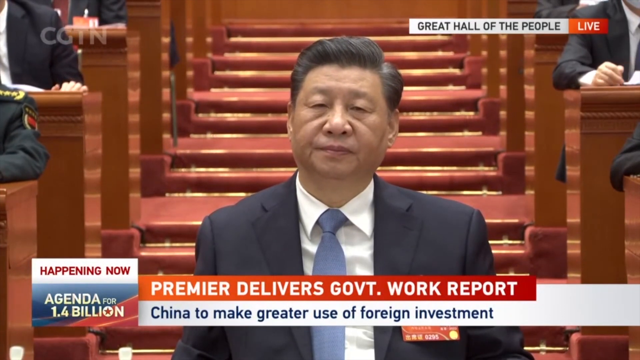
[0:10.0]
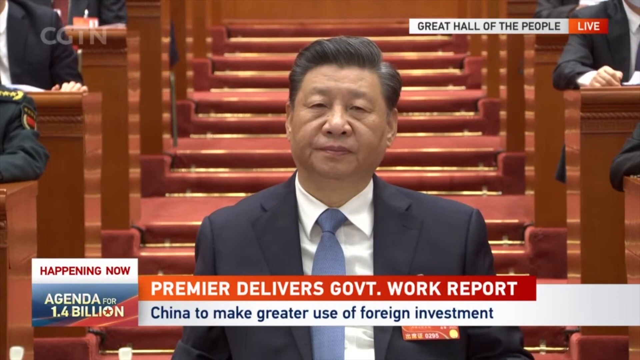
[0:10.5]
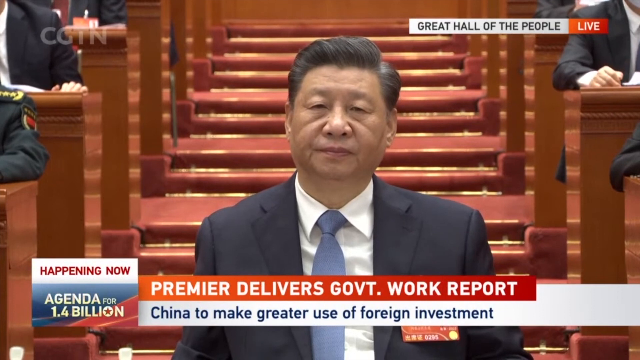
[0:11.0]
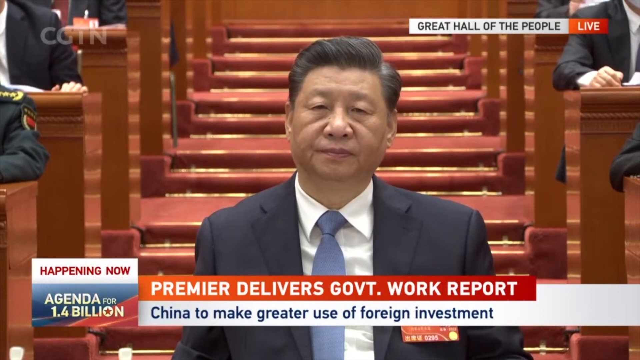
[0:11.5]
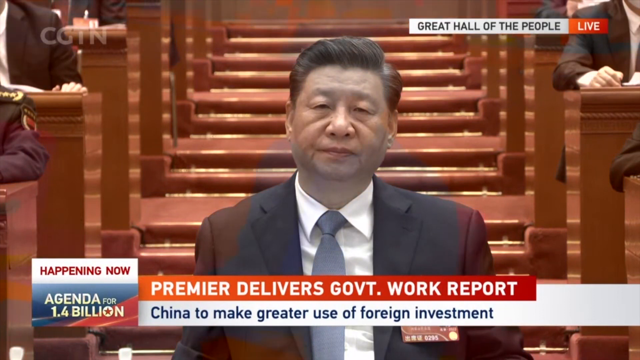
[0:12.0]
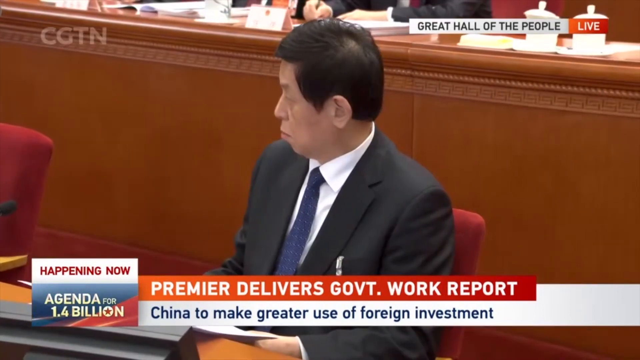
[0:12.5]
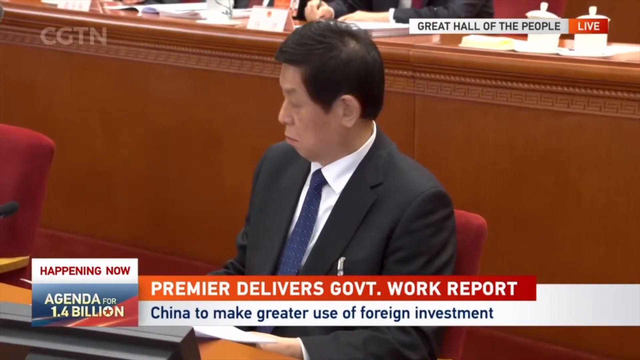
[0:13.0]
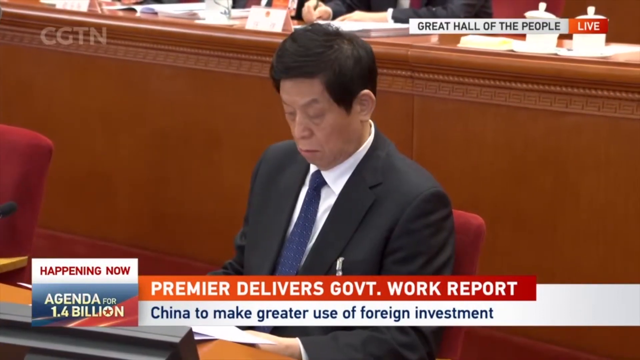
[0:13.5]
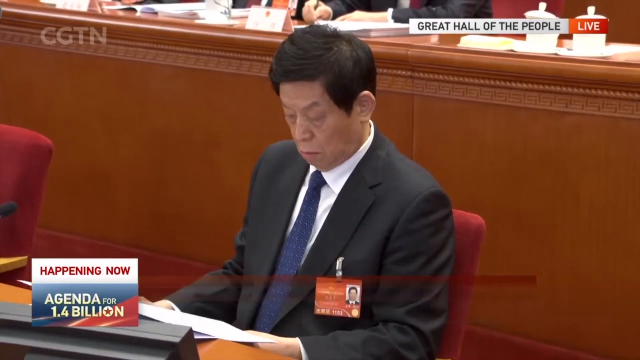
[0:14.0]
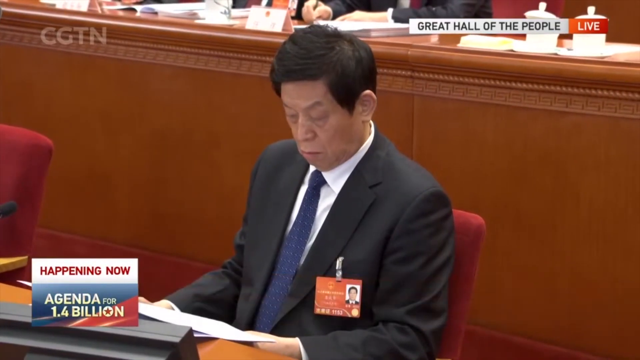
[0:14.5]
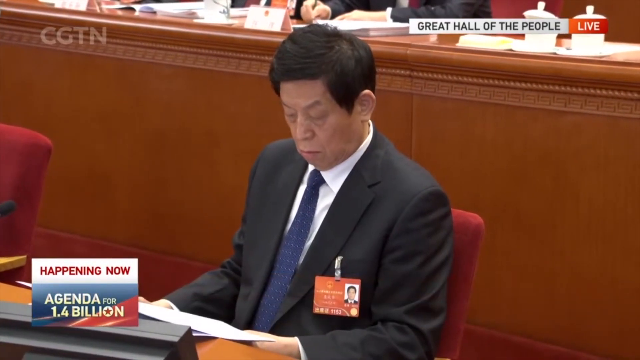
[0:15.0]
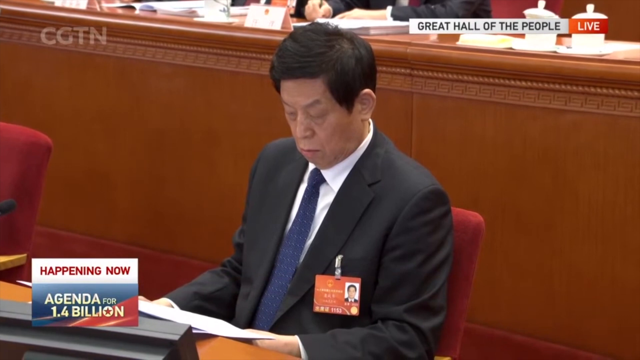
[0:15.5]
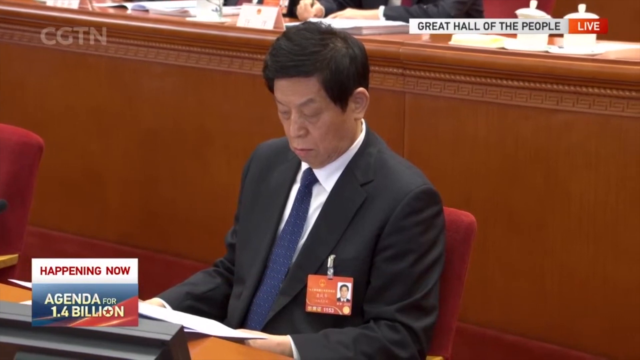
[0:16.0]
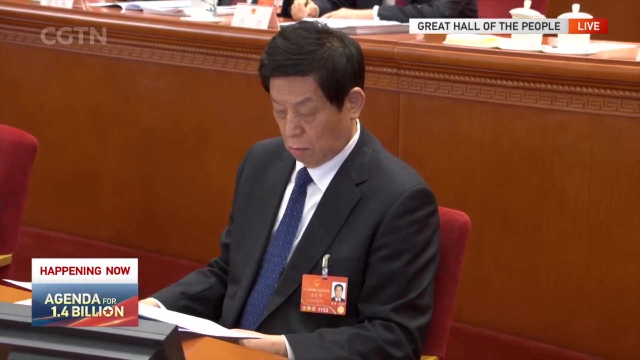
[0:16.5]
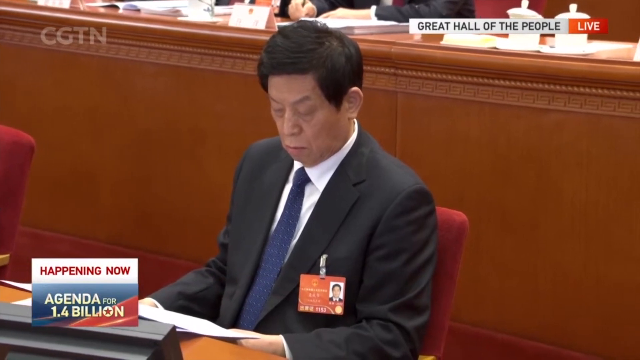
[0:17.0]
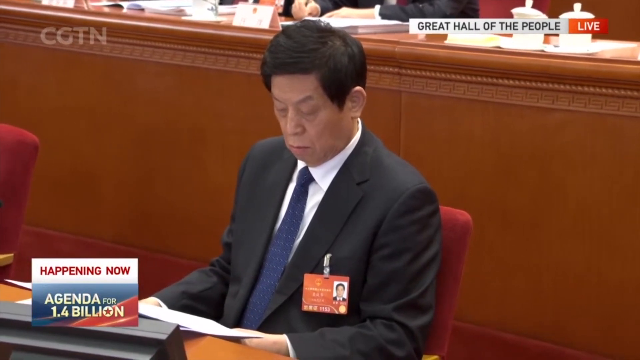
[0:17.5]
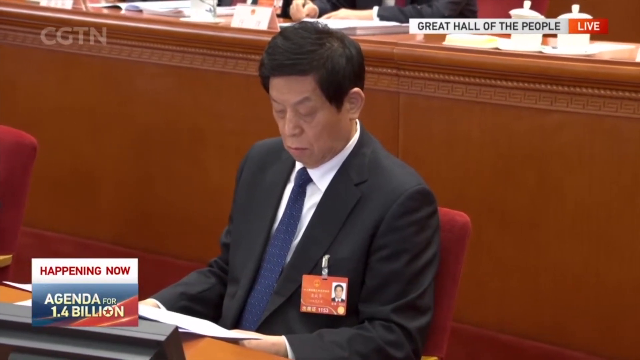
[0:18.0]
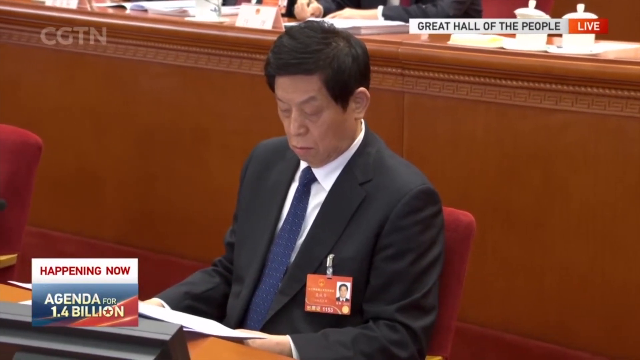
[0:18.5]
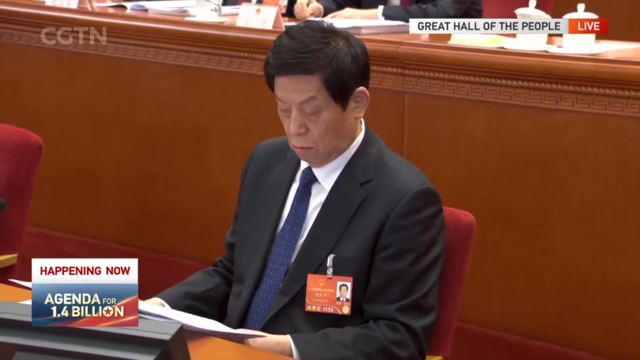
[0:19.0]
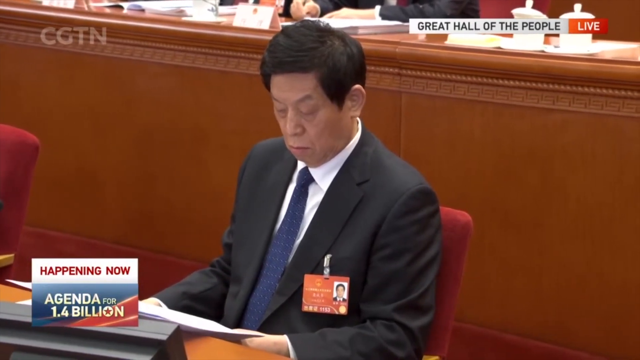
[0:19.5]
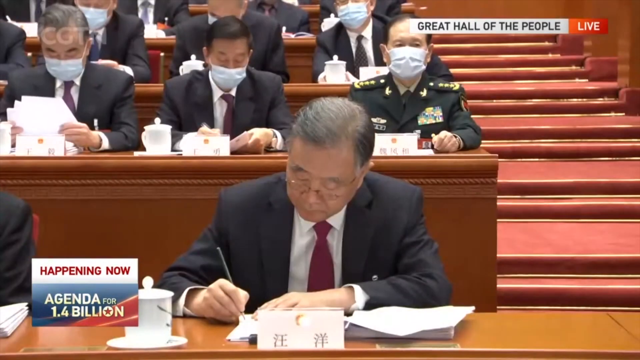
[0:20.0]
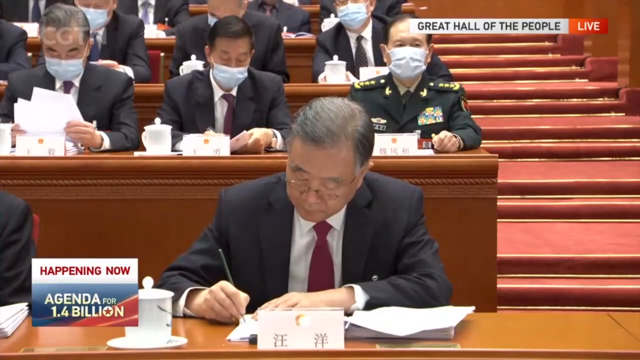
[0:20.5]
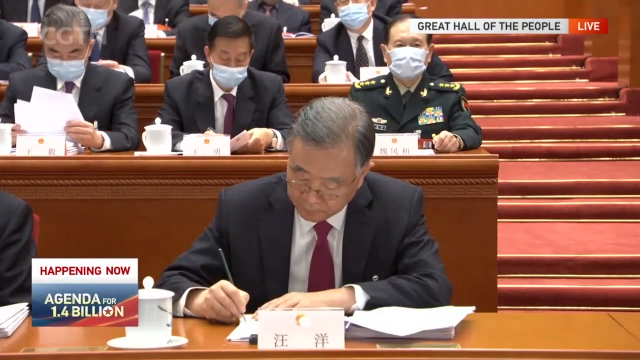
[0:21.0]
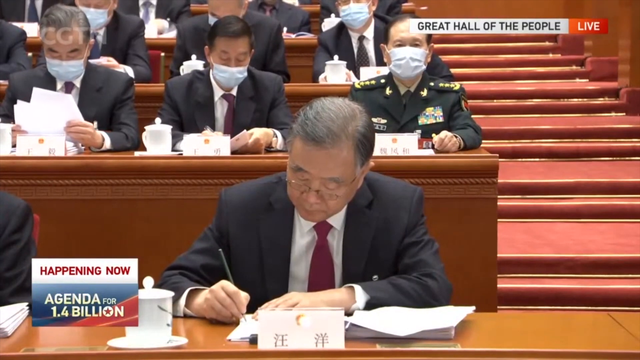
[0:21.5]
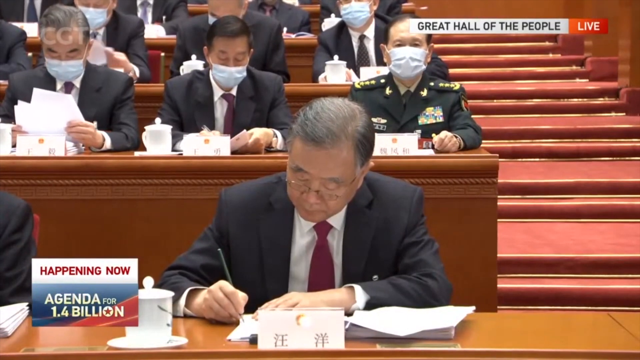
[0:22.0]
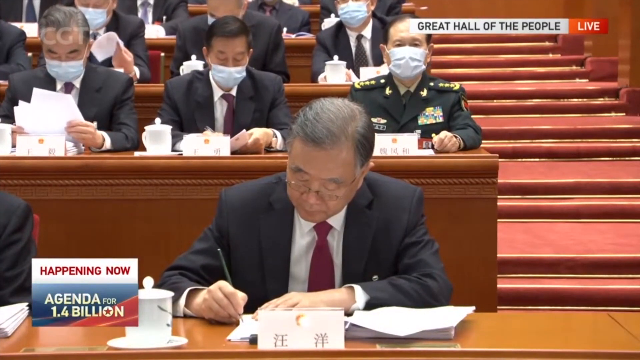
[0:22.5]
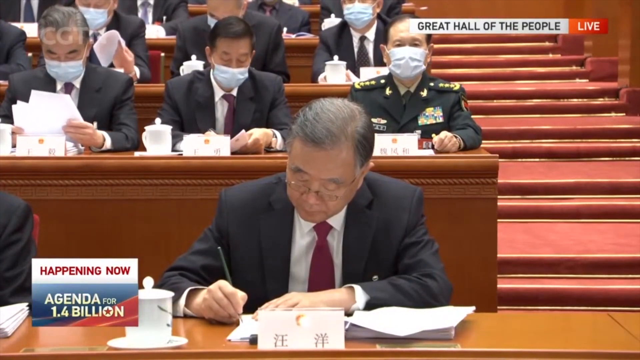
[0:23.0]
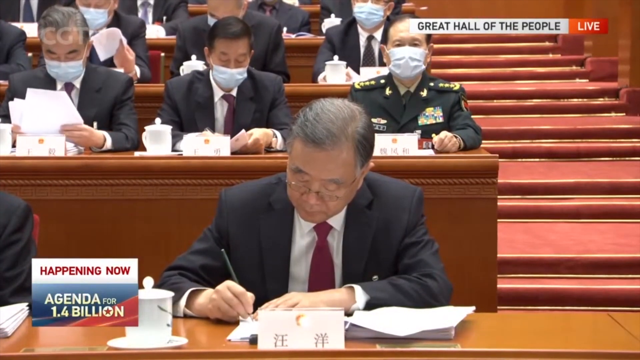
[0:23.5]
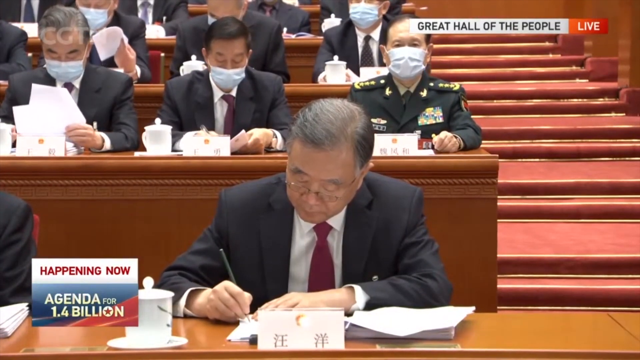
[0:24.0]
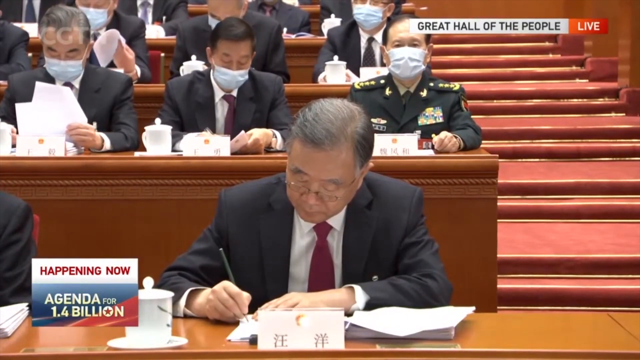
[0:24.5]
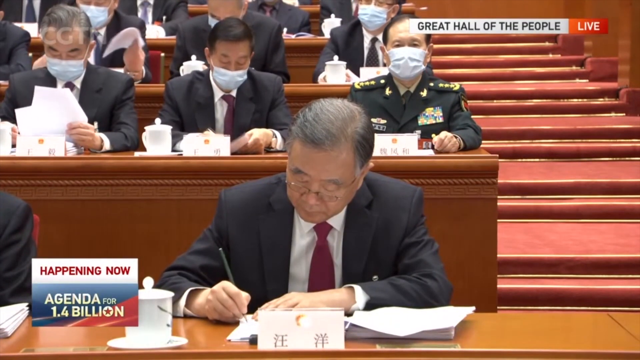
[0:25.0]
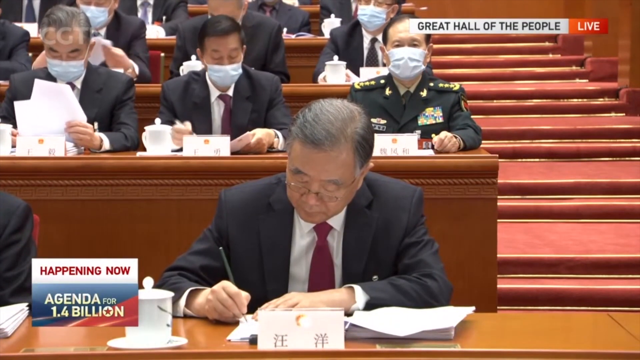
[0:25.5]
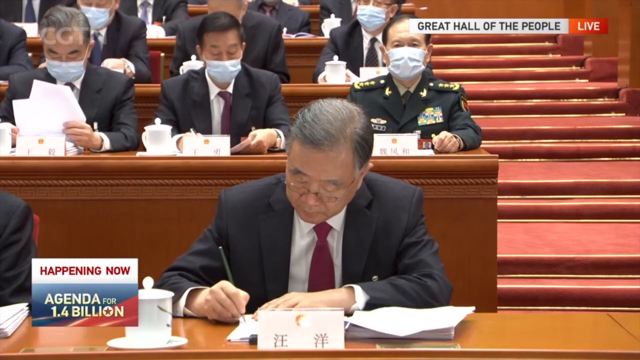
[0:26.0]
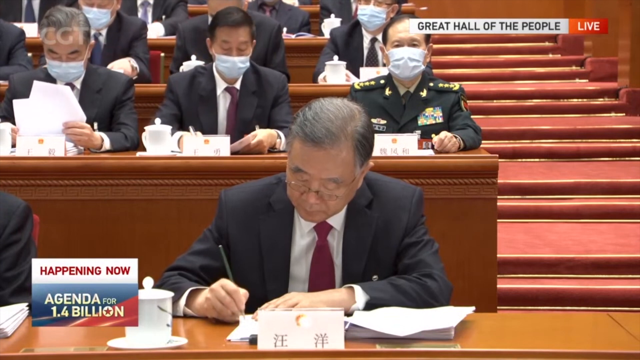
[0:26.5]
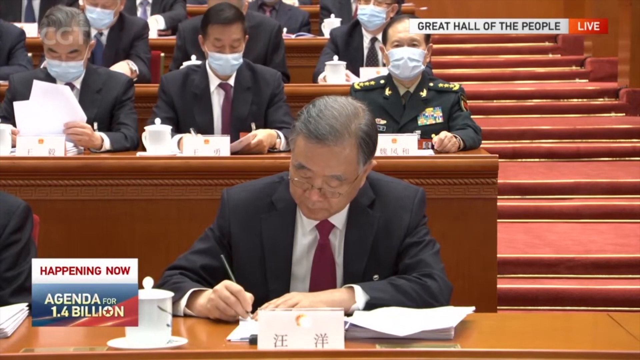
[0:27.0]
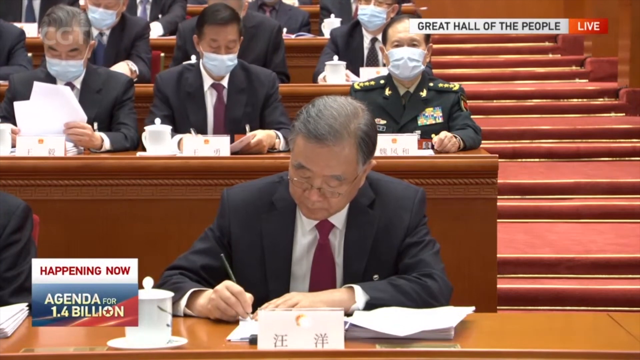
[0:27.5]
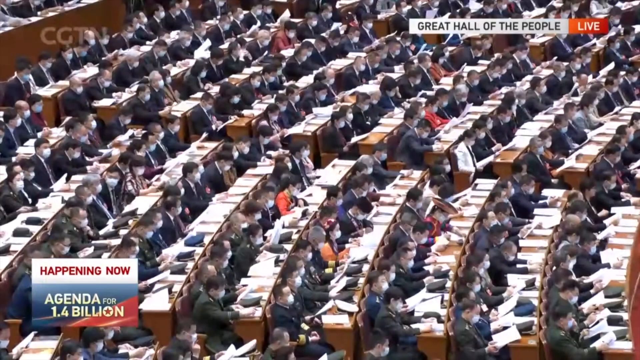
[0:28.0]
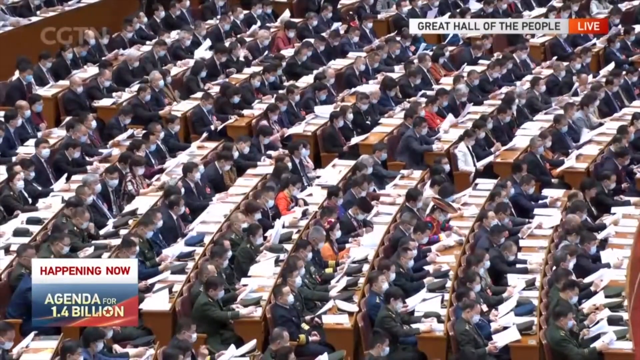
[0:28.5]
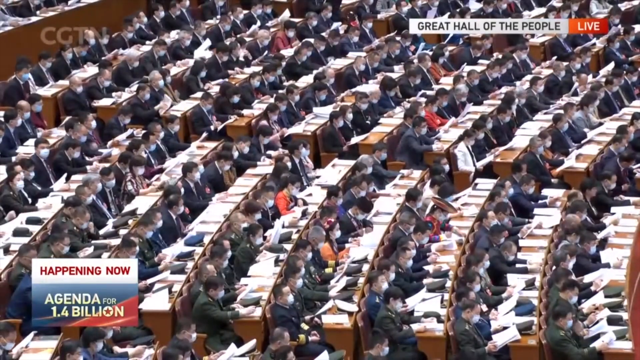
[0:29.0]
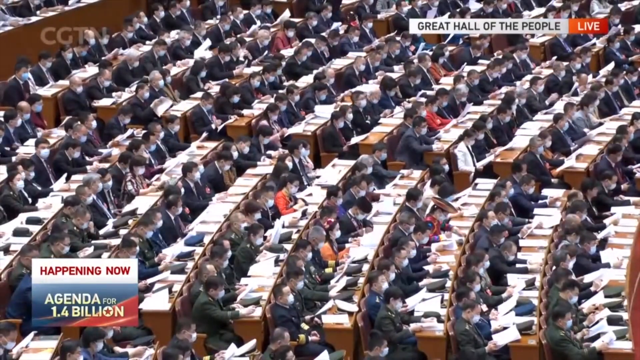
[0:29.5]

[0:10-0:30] The view switches to one of the men sitting at a desk. He wears a dark blazer and a blue polka-dotted tie and looks down at a paper on the desk in front of him, with a name badge pinned to one side of his jacket. Then the shot moves to another man seated at the desk, wearing a red tie and a dark-colored jacket, writing something on a paper in front of him. Behind him some of the other rows of desks are visible. All of the visible people wear face masks, and one man directly behind the man in focus wears a military uniform of some kind. Another overview of the desks follows, quite a bit closer than the first. Everybody seems to have papers in front of them, so much paper that the desks almost look white. The desks seem fairly packed, with each person sitting close to another.